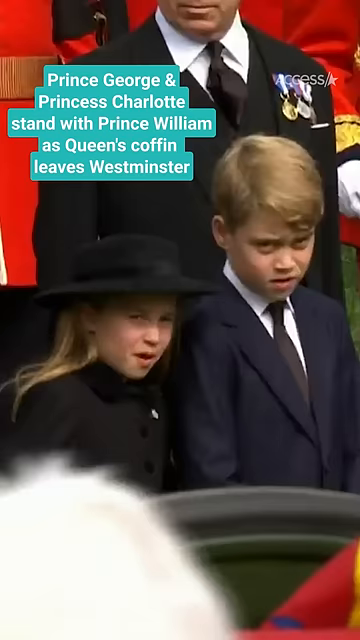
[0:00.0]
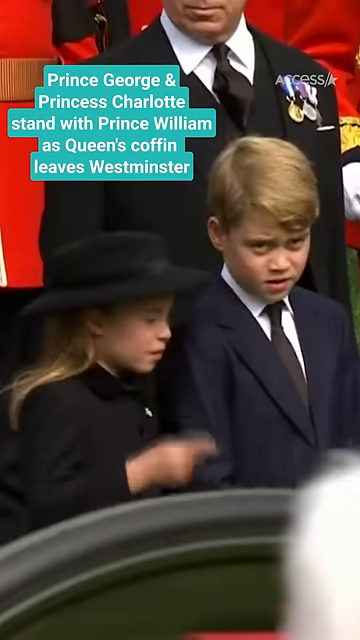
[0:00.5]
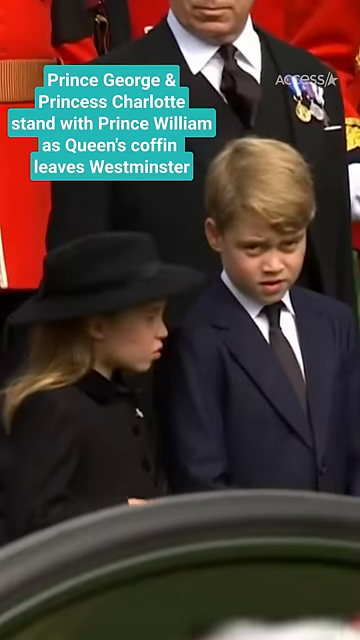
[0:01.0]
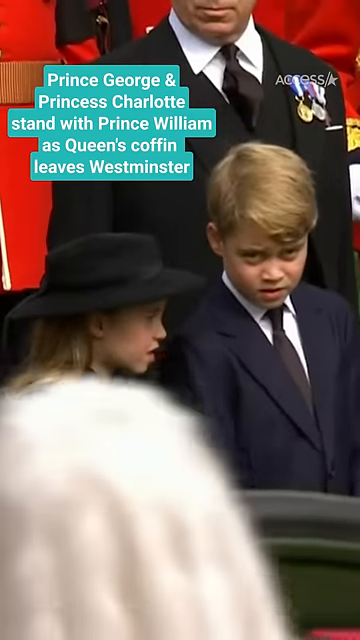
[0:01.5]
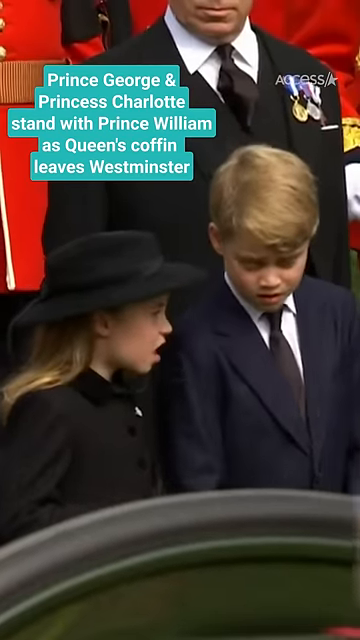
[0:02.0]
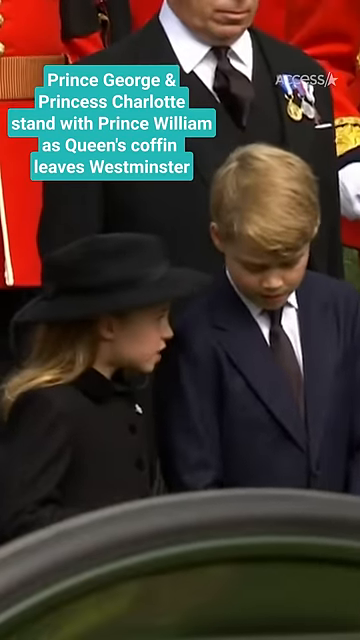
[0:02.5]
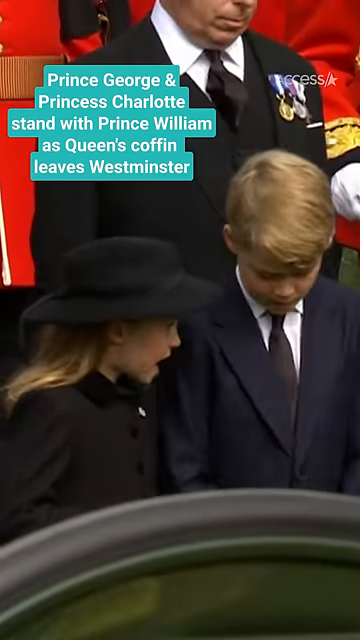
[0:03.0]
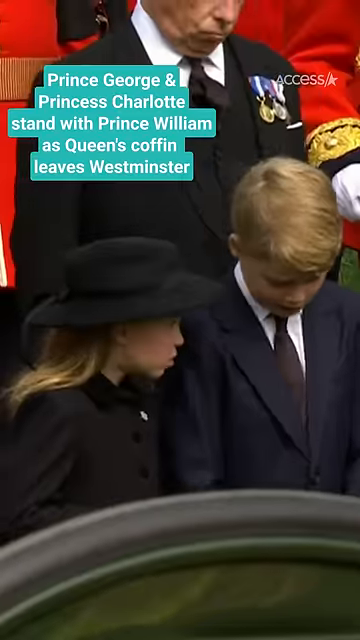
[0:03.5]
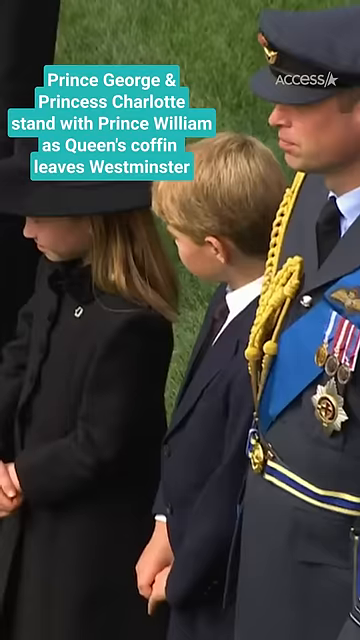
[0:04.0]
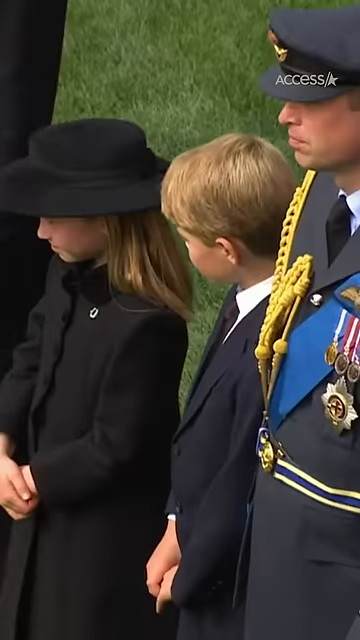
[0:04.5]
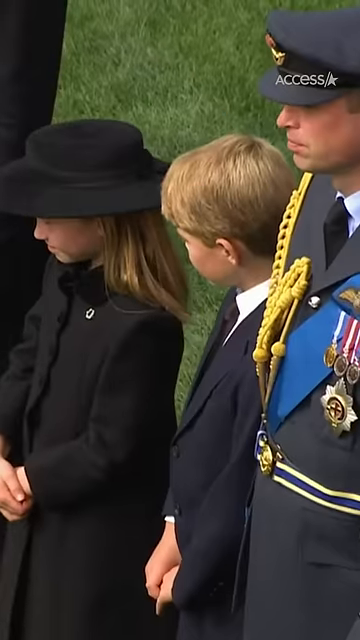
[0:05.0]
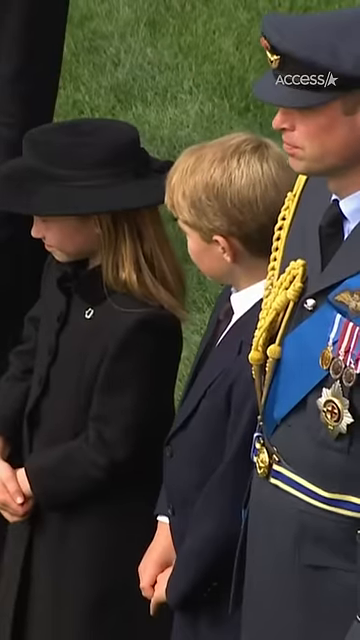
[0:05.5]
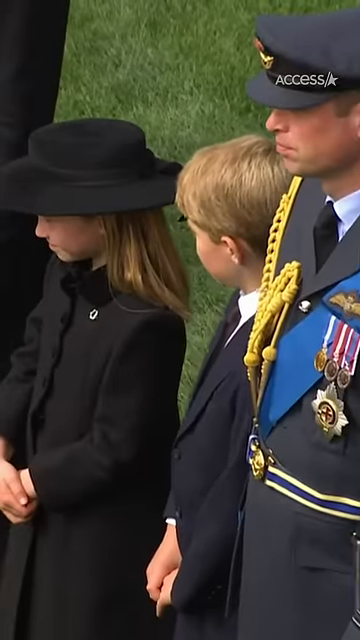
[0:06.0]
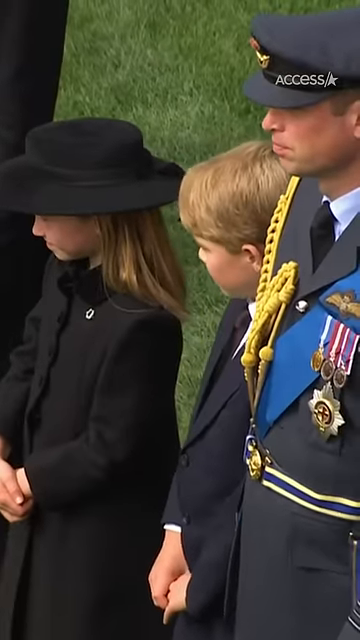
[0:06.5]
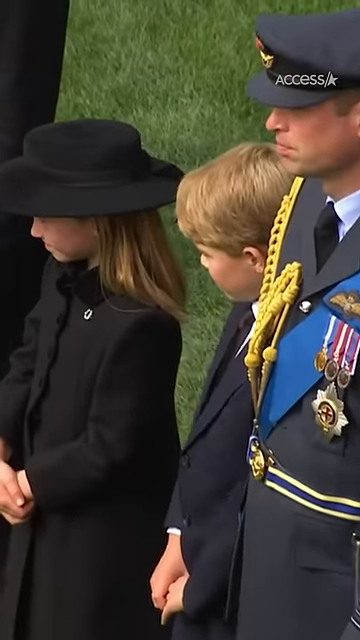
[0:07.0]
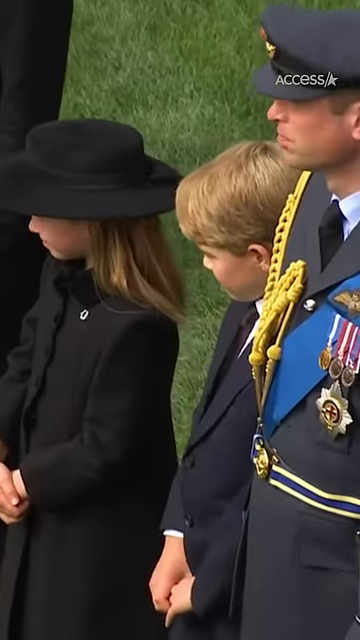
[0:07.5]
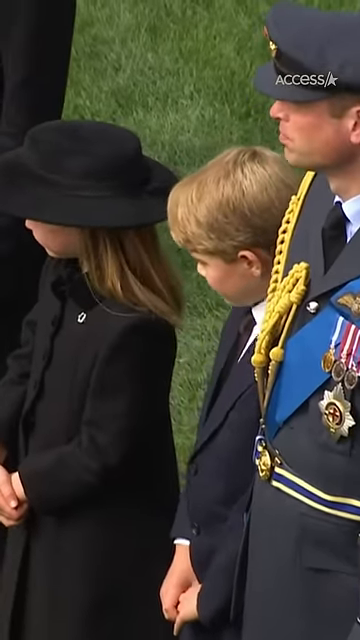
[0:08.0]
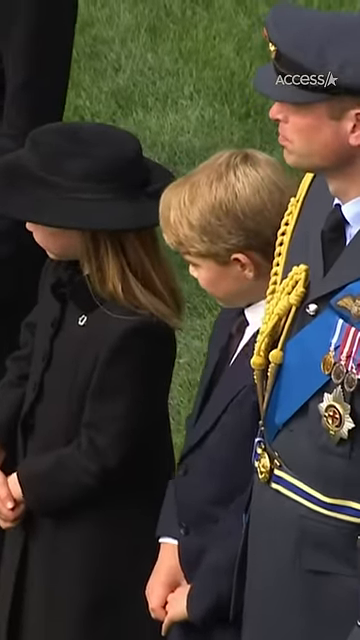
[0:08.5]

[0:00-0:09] Prince George and Princess Charlotte appear in this video. It opens with white text on a teal background stating that they stand with Prince William as the Queen's coffin leaves Westminster. In the first shot, Charlotte stands on the left, speaking to George, who stands on the right. Charlotte wears black and a black hat, while George wears a dark-colored suit with a white shirt and a dark tie. The video then transitions to another camera angle looking down on the children, with their father, Prince William, standing to the right of them. He wears an outfit bearing all of his military medals and decorations. There is a lot of grass in the background, and some of the arms and legs of other attendees are just visible.